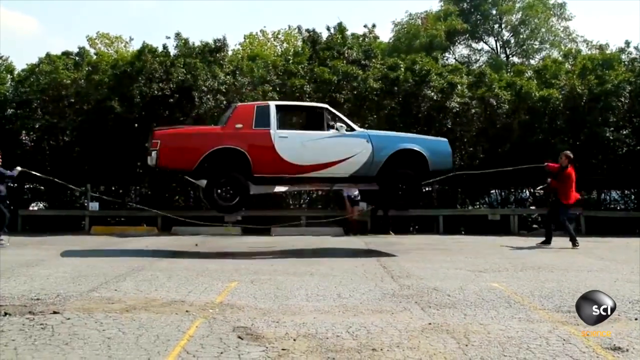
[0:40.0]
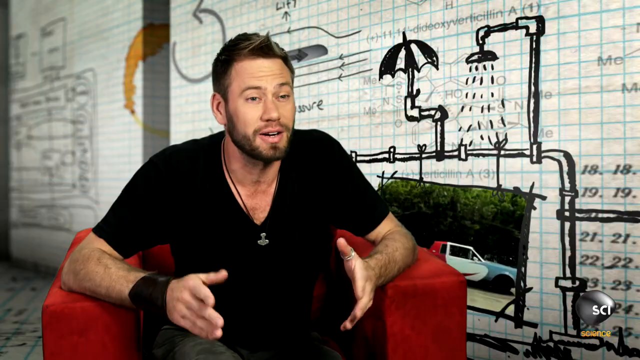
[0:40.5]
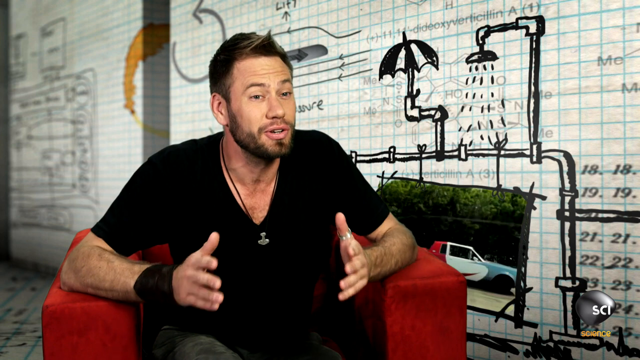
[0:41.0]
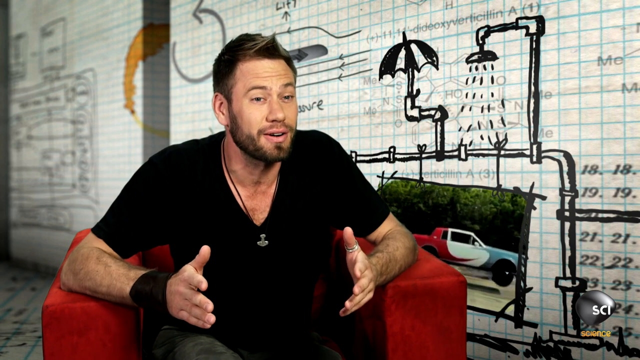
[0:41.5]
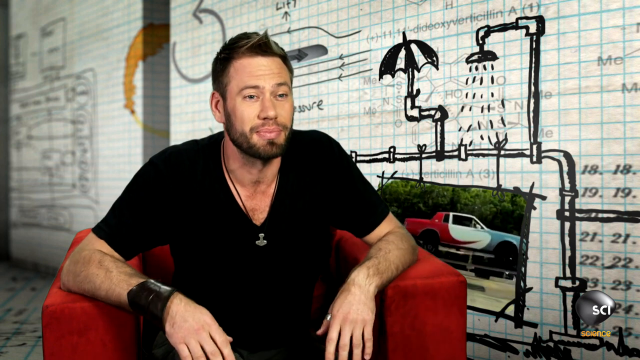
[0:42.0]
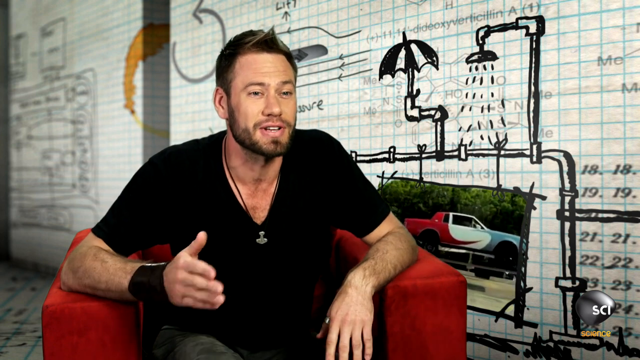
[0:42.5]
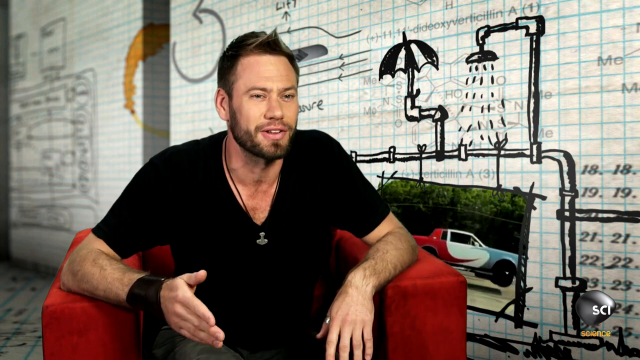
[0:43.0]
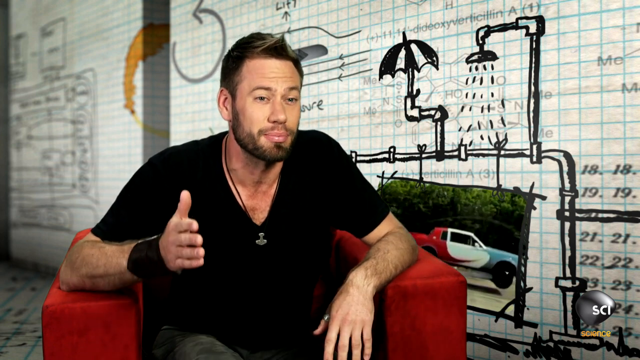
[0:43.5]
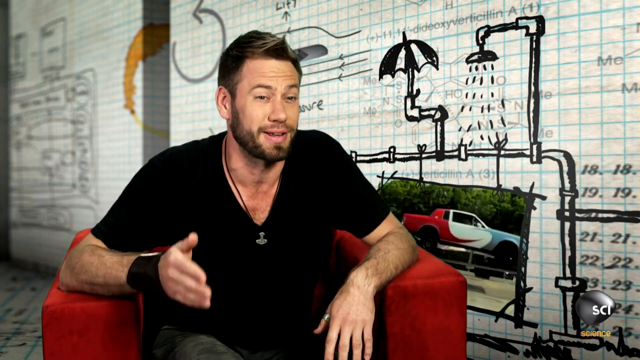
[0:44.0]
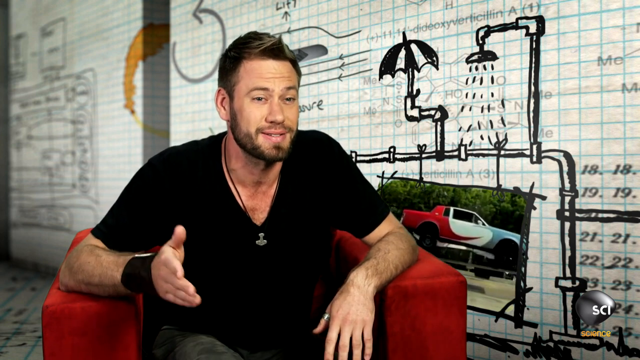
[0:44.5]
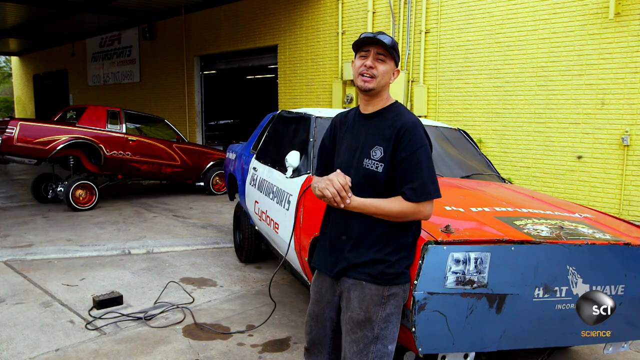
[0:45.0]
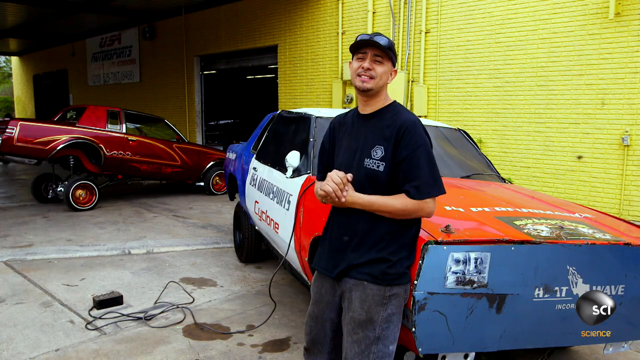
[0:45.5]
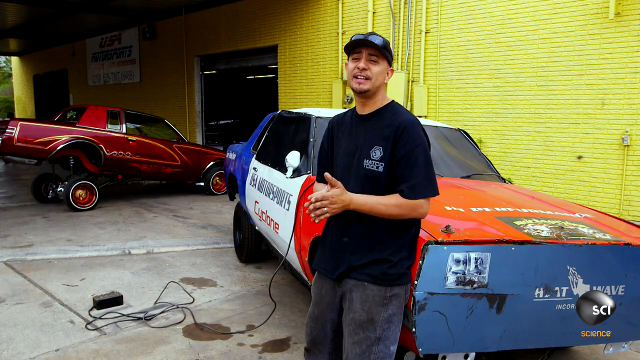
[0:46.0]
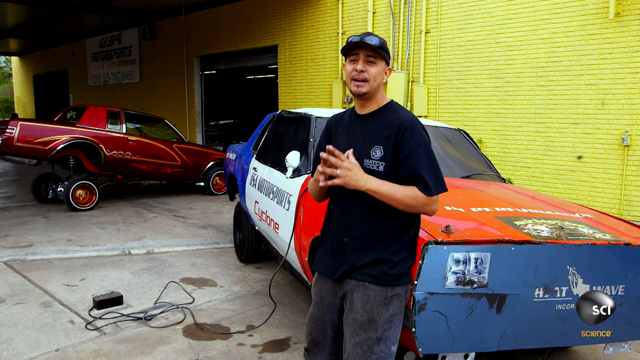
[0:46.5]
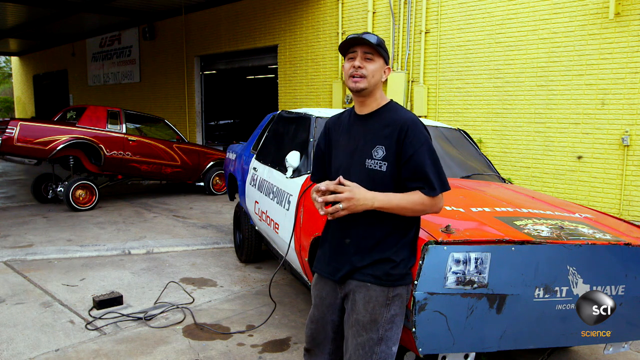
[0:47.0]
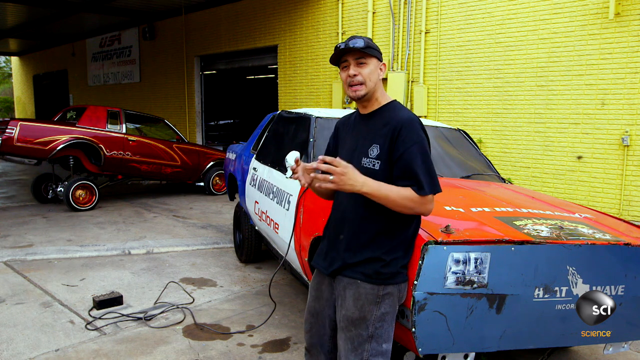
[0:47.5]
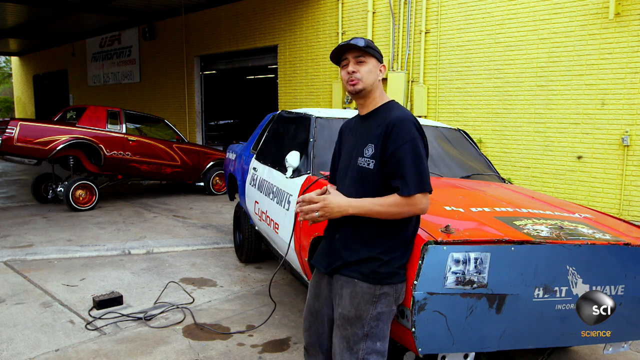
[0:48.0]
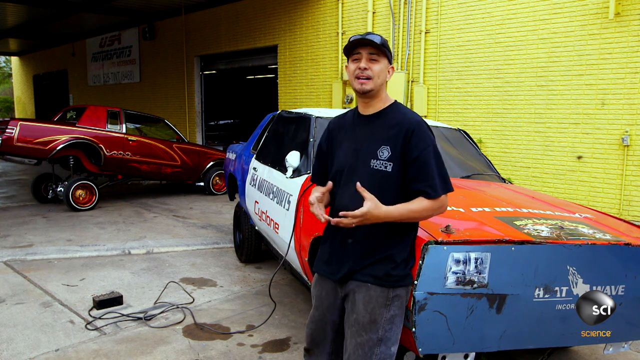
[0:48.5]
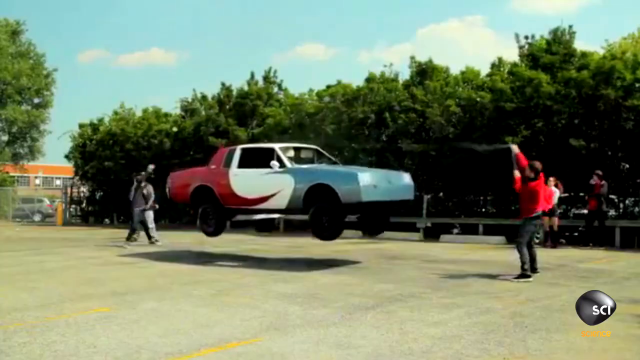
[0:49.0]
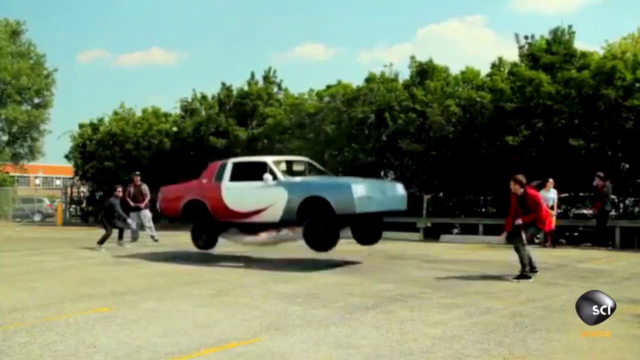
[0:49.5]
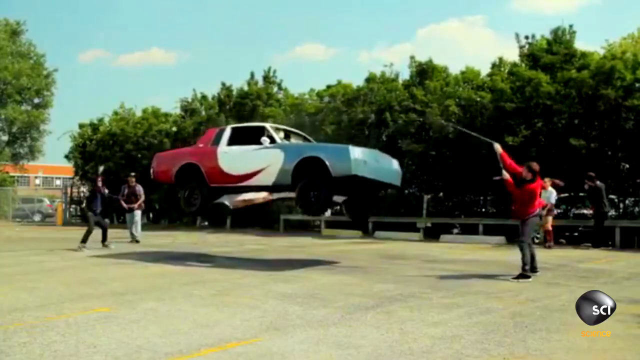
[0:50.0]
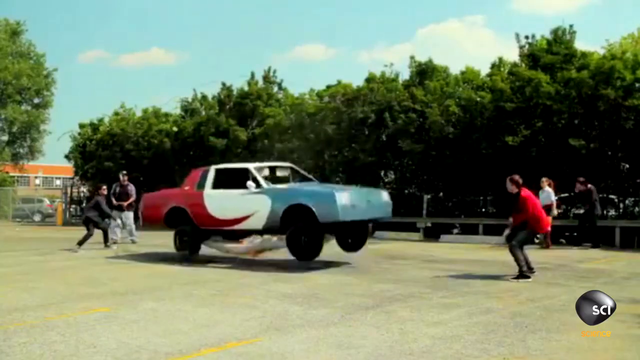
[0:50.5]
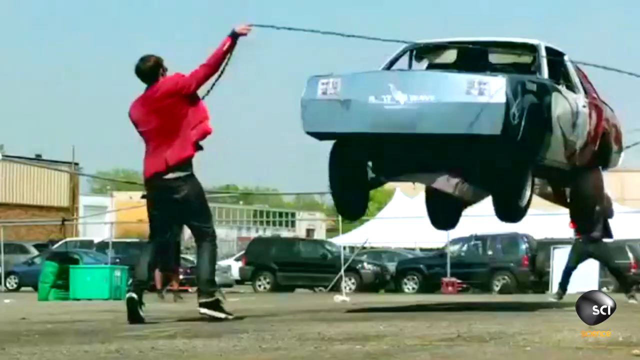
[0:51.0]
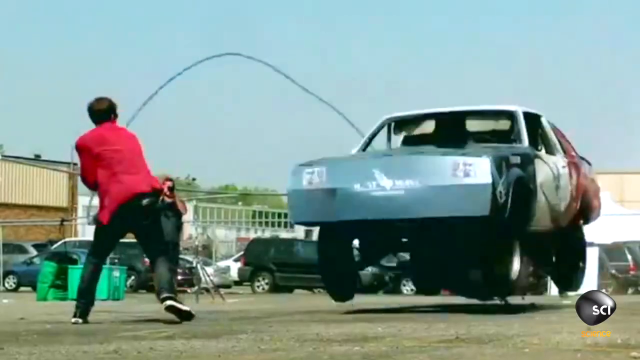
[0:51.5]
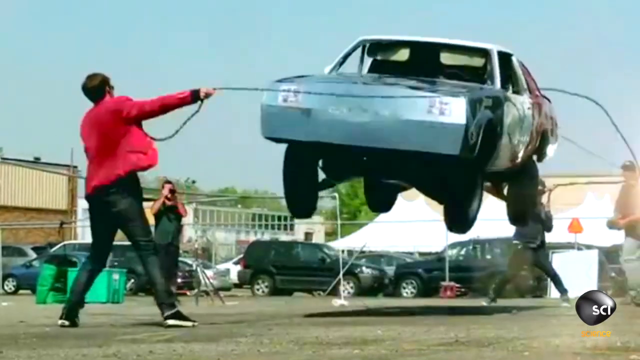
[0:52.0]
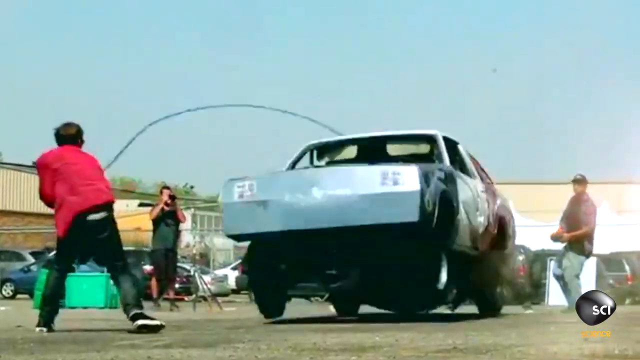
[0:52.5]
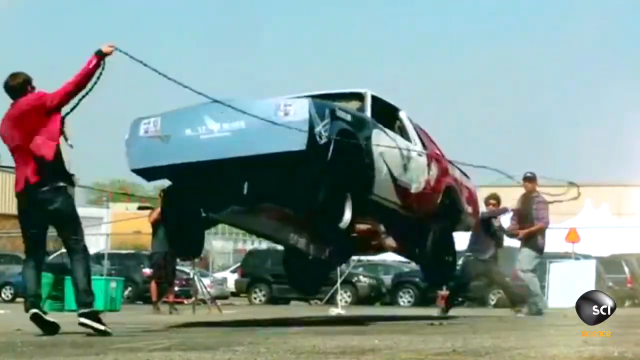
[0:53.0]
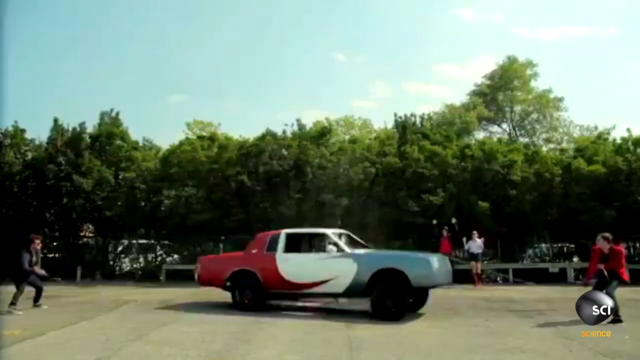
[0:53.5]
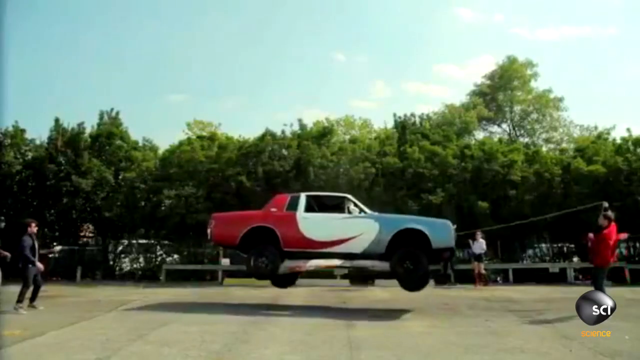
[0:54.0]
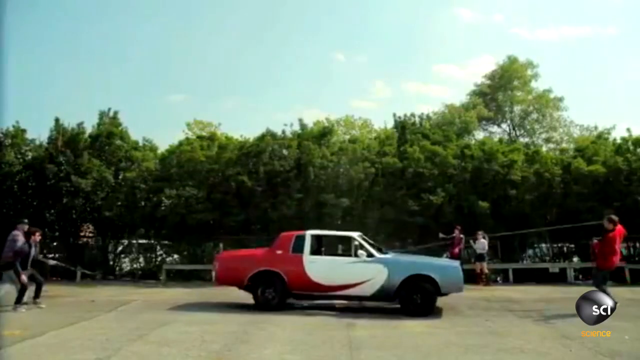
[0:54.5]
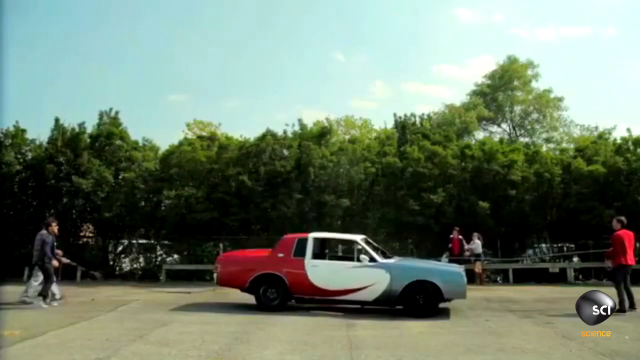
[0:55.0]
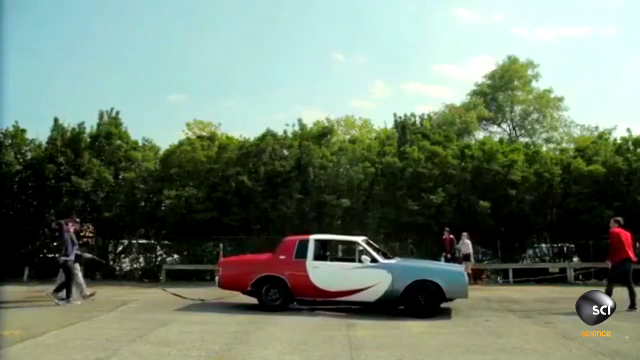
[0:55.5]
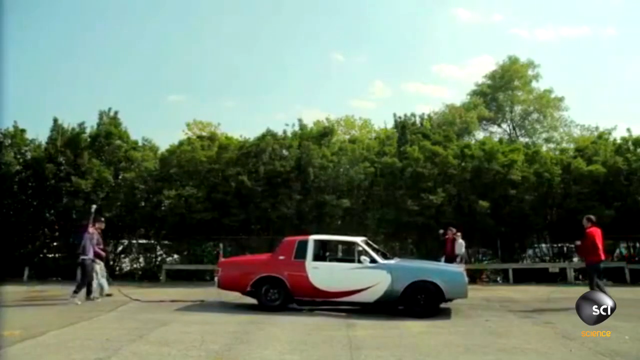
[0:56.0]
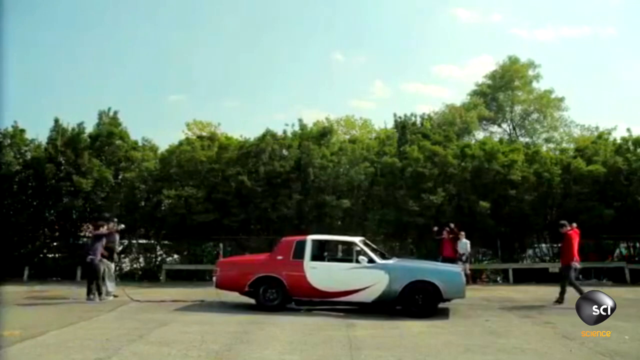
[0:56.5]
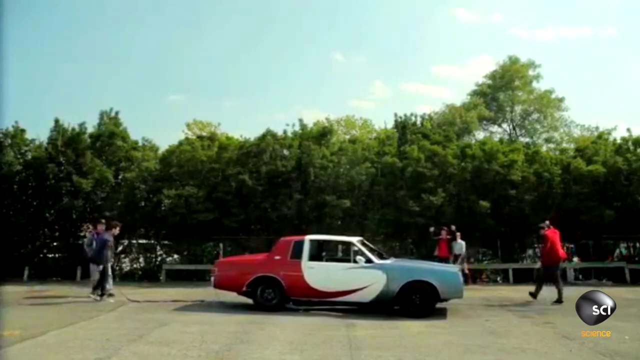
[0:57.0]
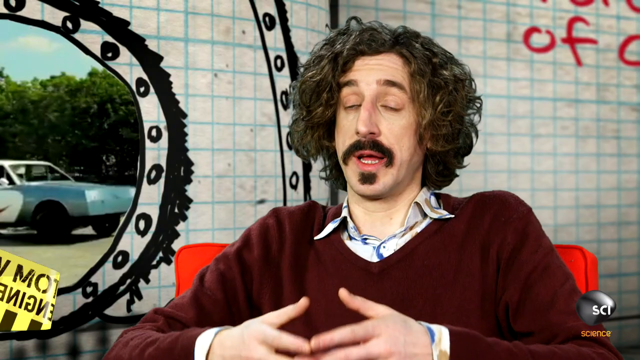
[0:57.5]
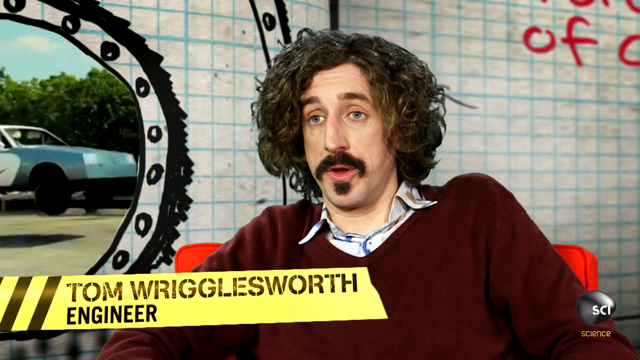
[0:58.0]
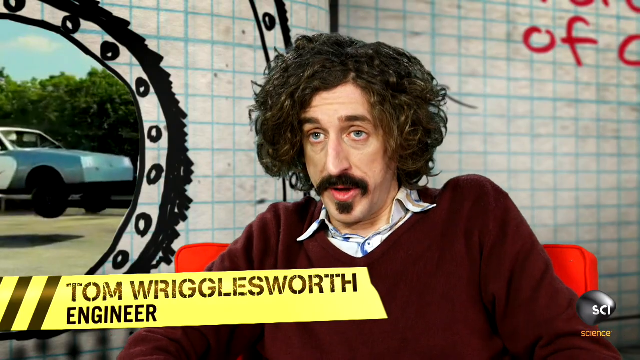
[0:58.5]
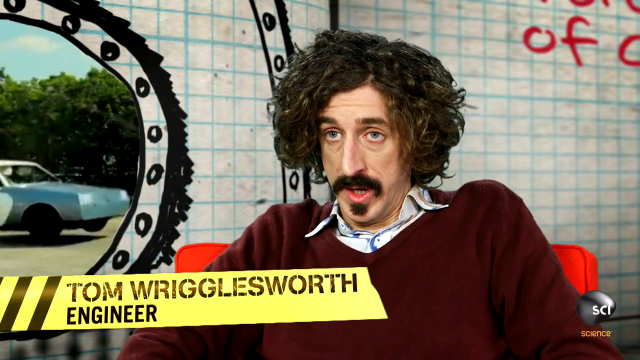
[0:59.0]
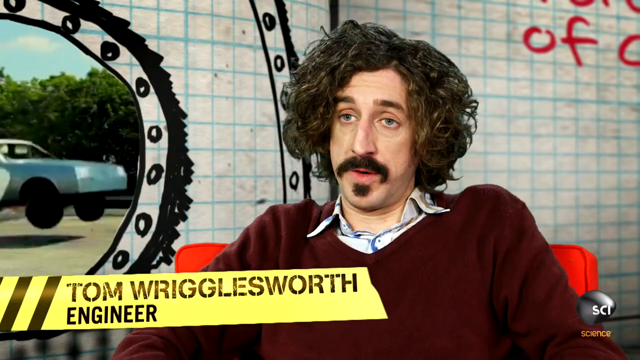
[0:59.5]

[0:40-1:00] The video cuts to the side-on view of the car jumping over the skipping rope. It then cuts to another presenter, a man with a bit of a quiff haircut and a thin beard, wearing a black t-shirt and trousers, sat in a red chair, the presenter's chair from earlier. He is saying something about the scene. It then cuts to the man in the black cap leaning against the car, also giving some explanation, and then back to the car bouncing in the air over the skipping rope. The final shot is of another presenter sitting in a red chair in the room with the white background. He wears a crumpled white shirt and a purple burgundy v-neck jumper, has a black goatee beard and a thick black moustache, and thick wavy hair coming down to just short of his shoulders. He is giving some kind of commentary on what has just happened. A yellow sign at the bottom with two black diagonal lines shows that his name is Tom Wriglesworth and that he is an engineer.